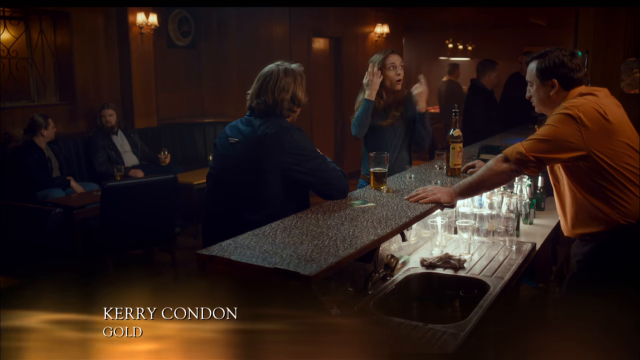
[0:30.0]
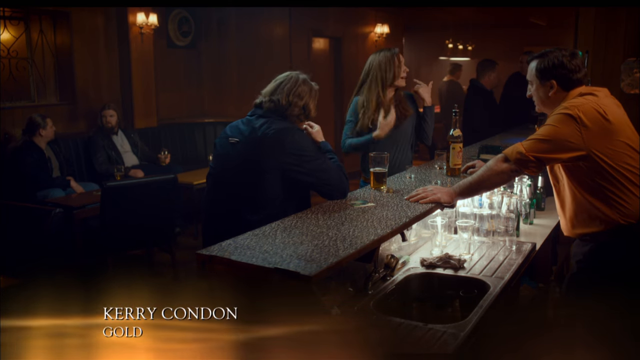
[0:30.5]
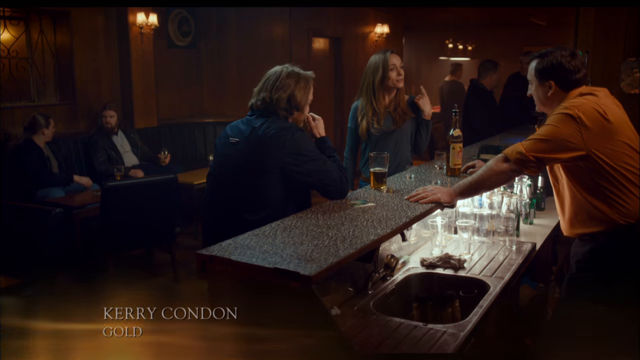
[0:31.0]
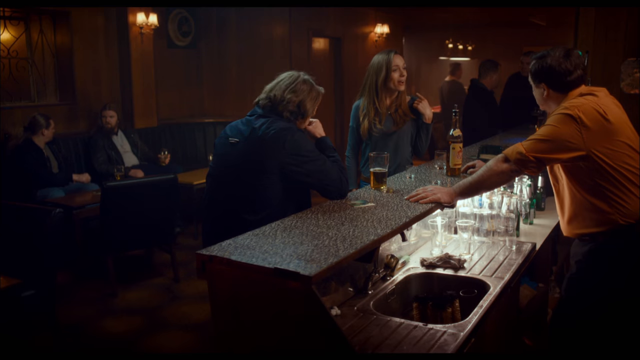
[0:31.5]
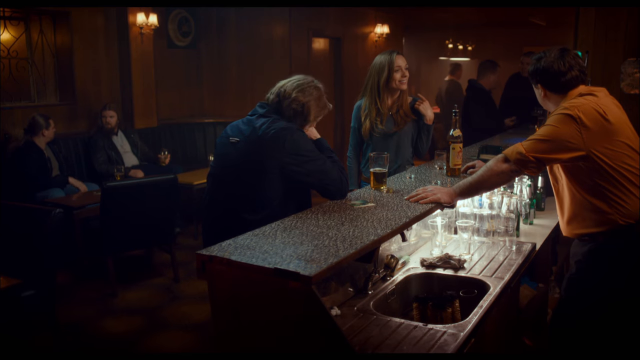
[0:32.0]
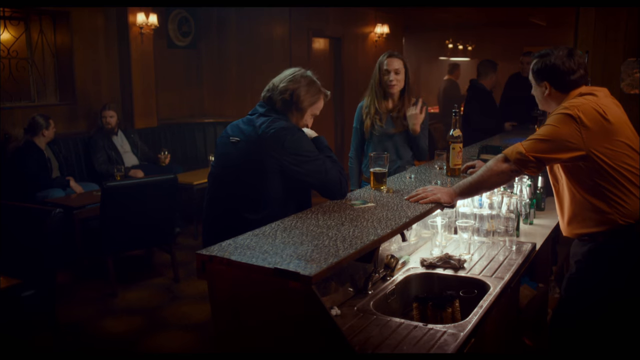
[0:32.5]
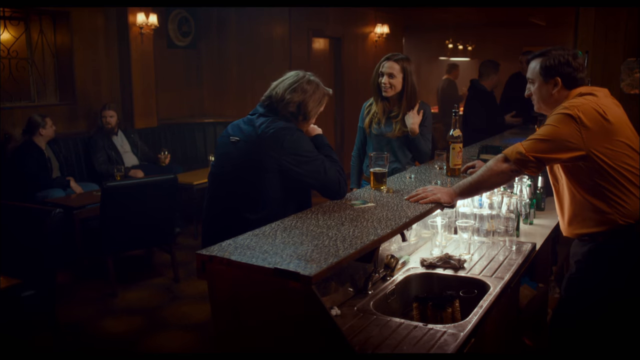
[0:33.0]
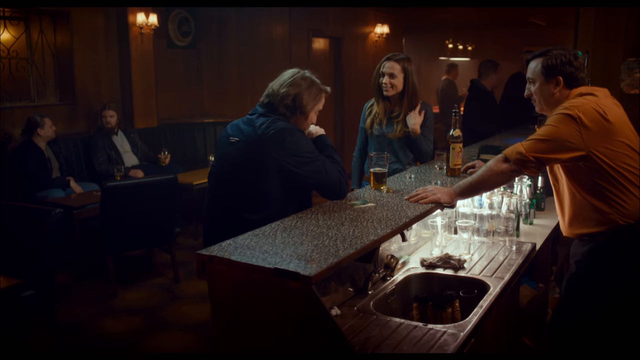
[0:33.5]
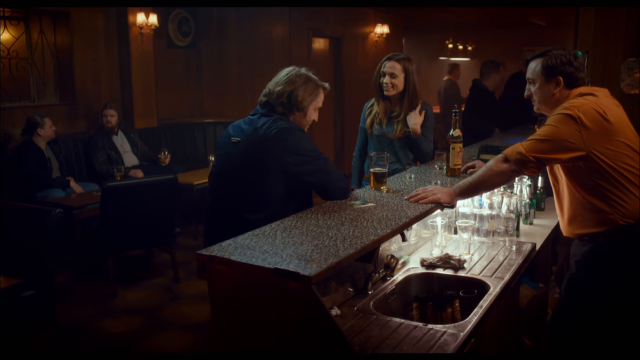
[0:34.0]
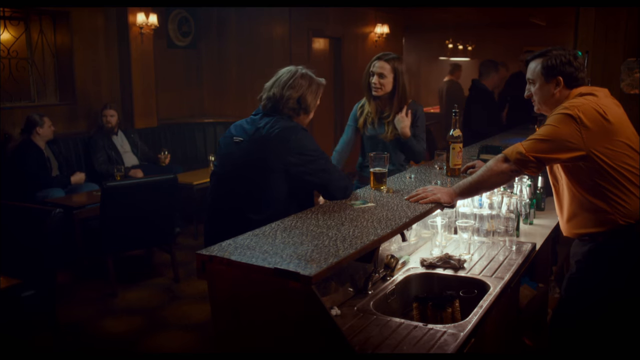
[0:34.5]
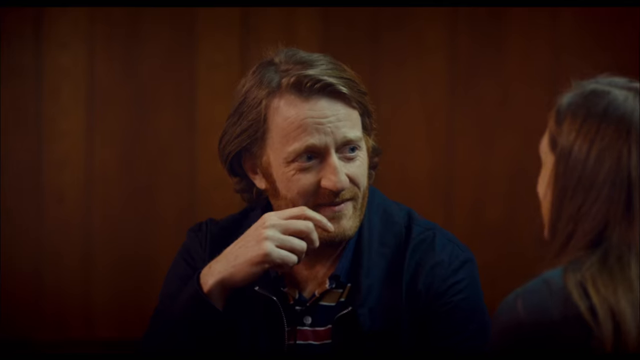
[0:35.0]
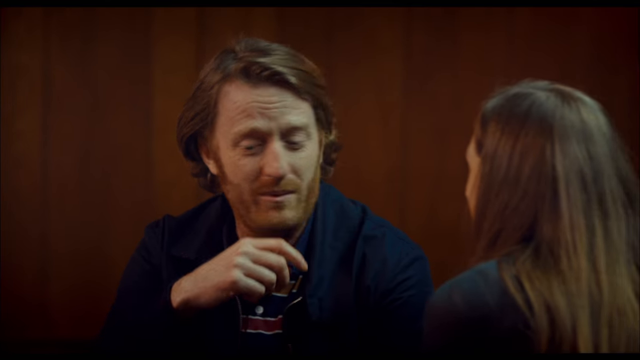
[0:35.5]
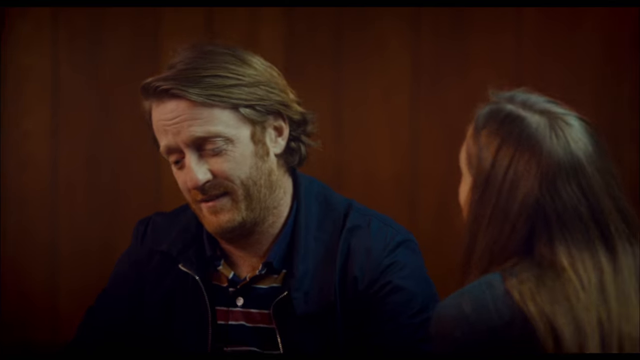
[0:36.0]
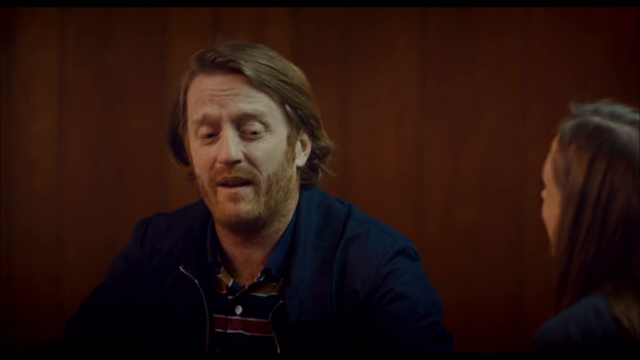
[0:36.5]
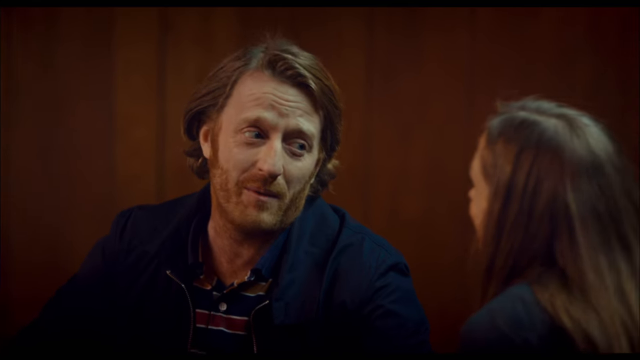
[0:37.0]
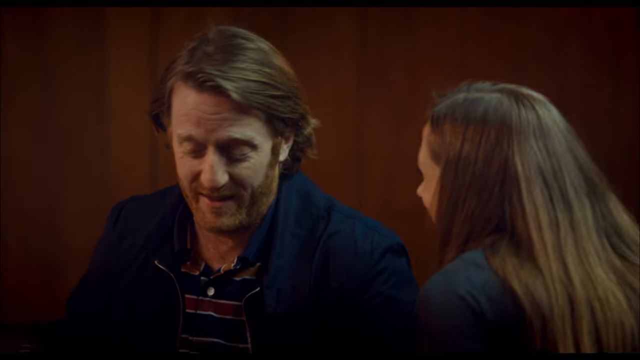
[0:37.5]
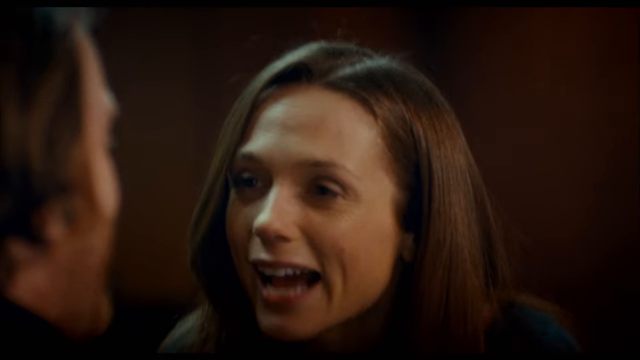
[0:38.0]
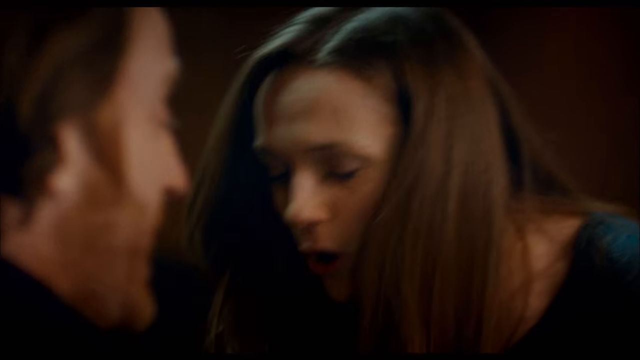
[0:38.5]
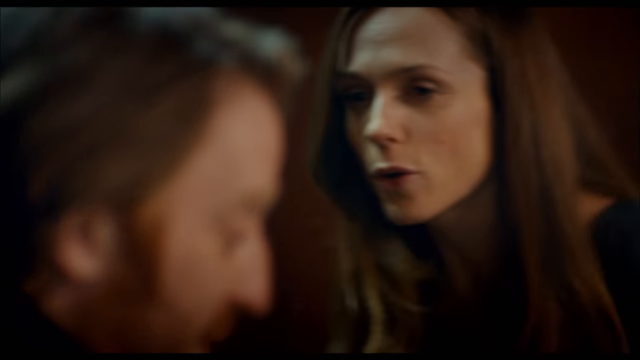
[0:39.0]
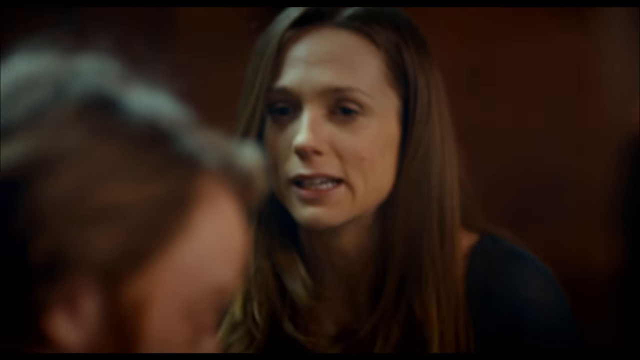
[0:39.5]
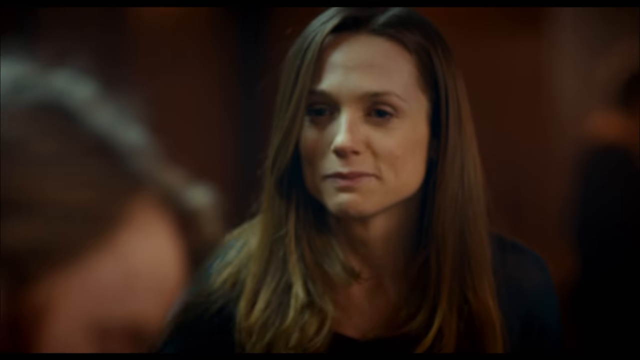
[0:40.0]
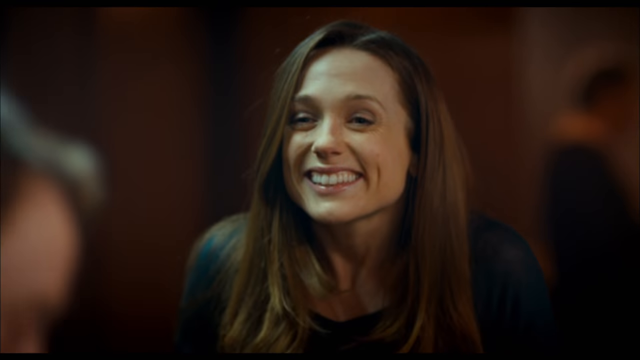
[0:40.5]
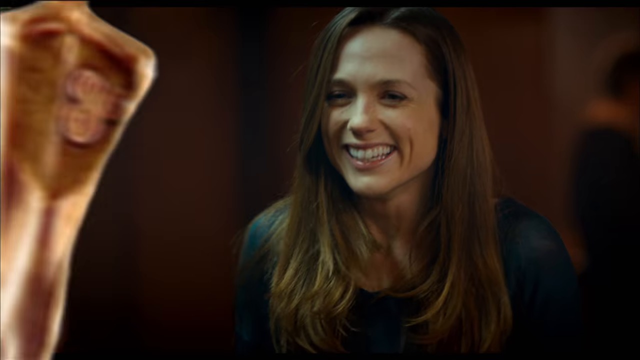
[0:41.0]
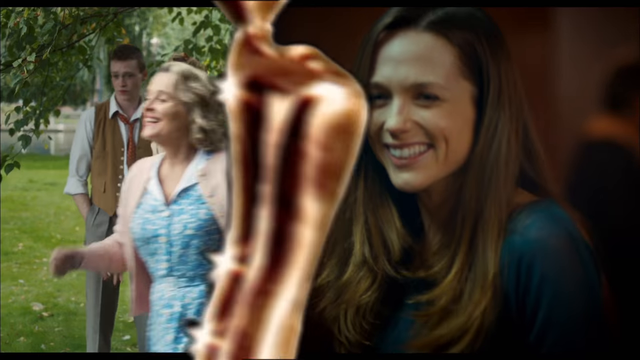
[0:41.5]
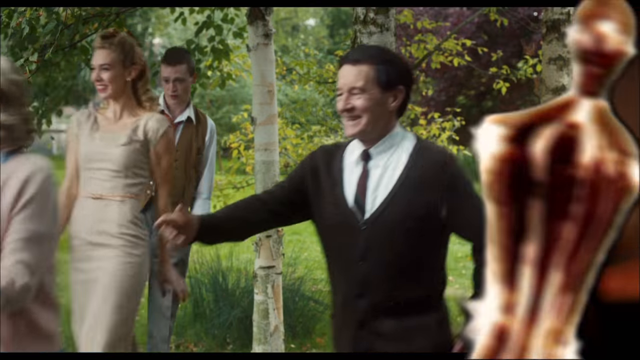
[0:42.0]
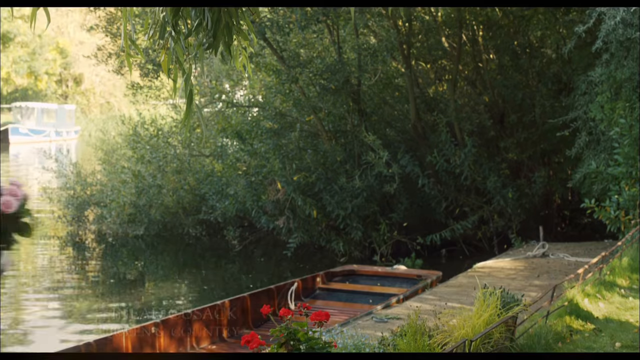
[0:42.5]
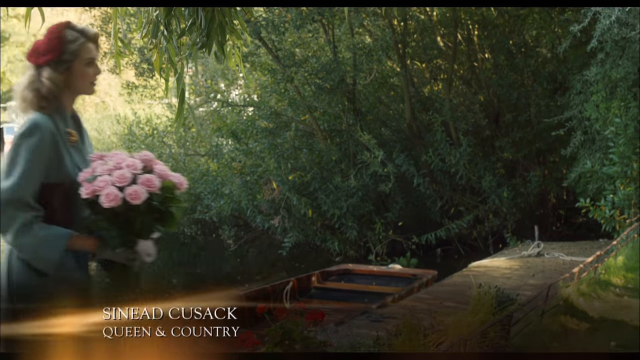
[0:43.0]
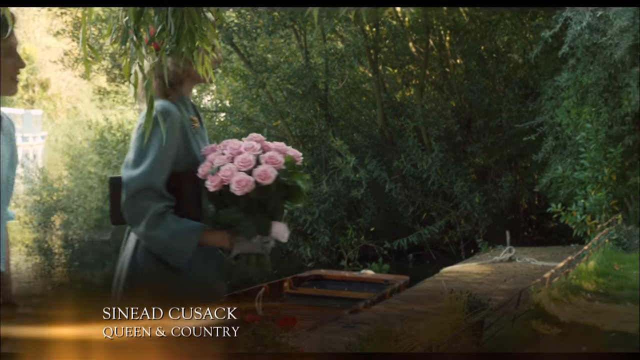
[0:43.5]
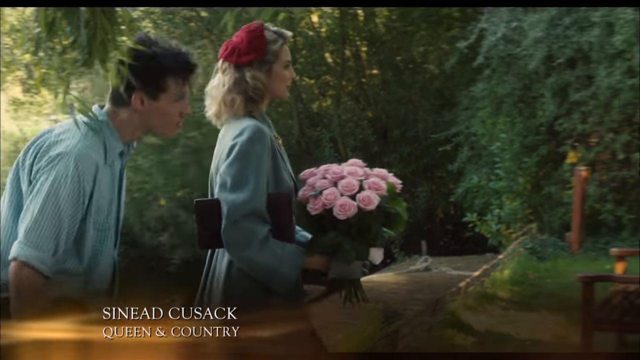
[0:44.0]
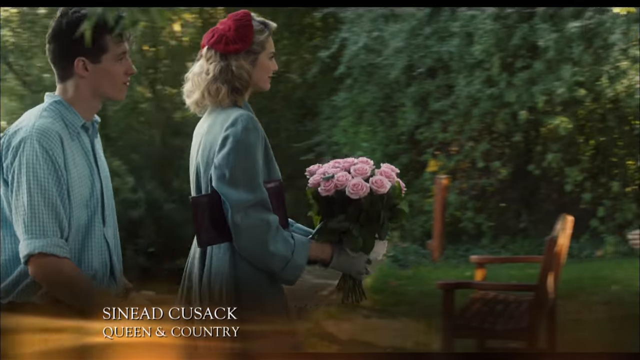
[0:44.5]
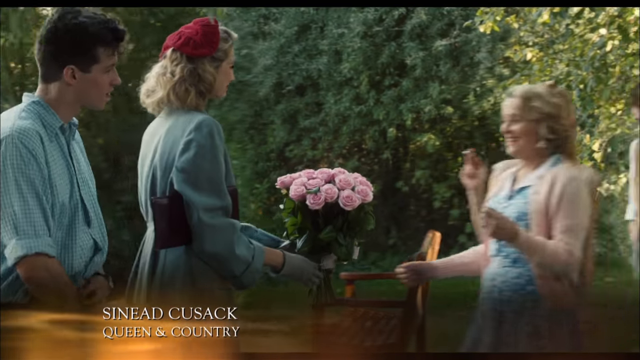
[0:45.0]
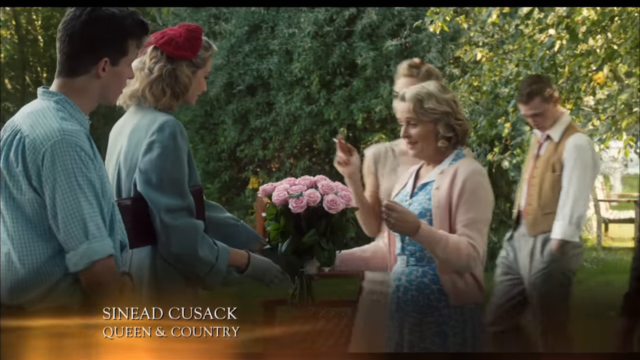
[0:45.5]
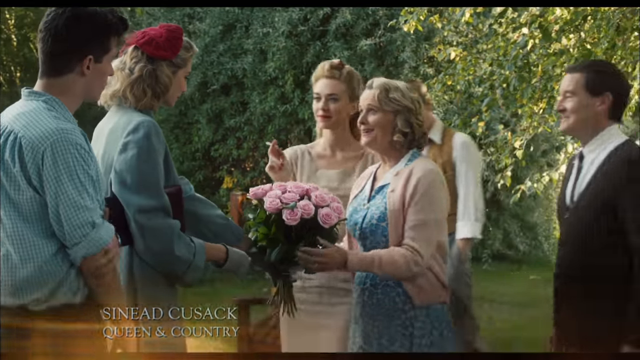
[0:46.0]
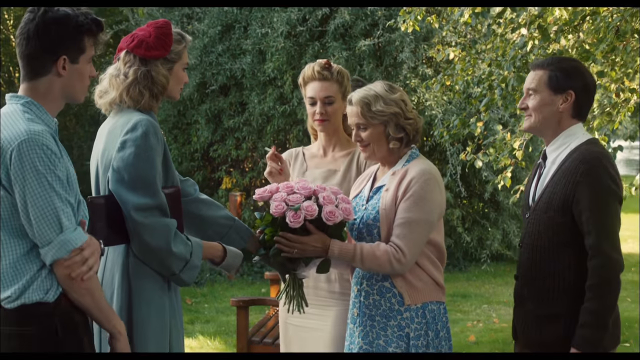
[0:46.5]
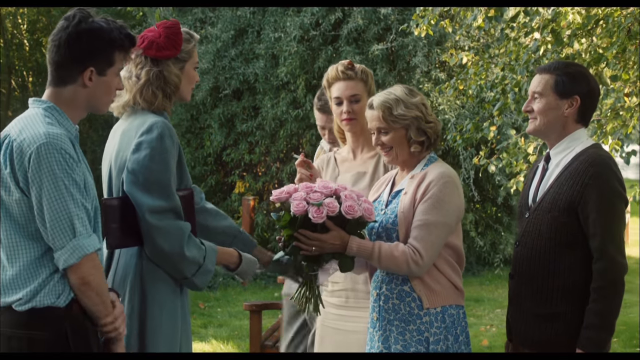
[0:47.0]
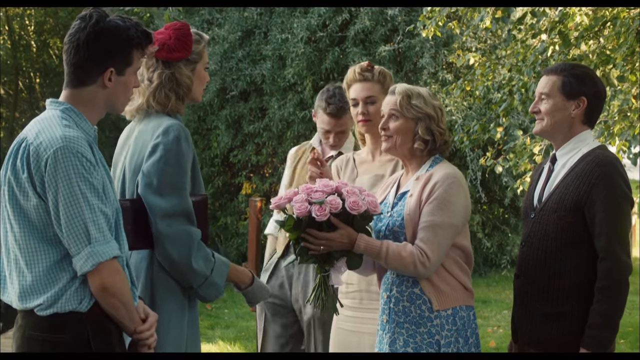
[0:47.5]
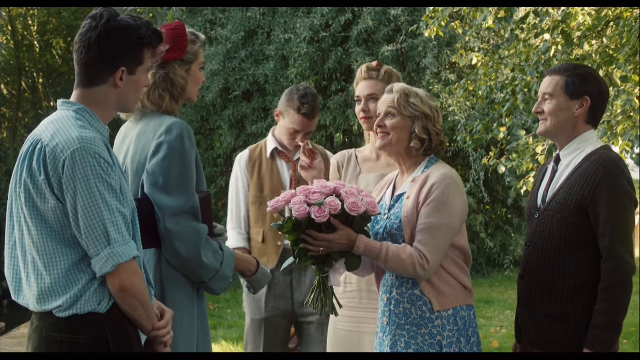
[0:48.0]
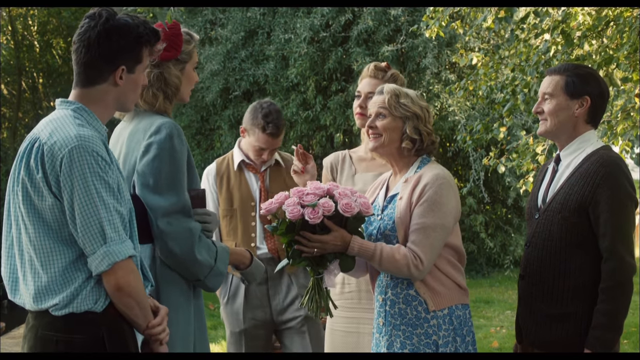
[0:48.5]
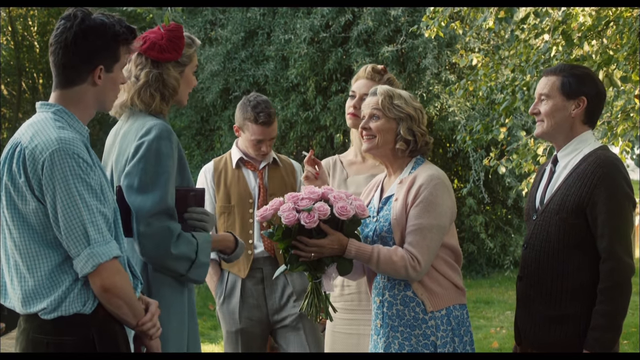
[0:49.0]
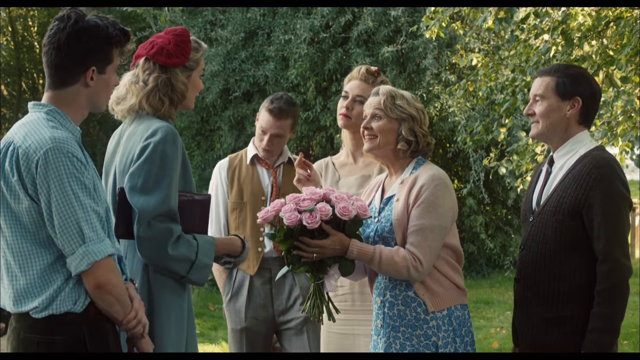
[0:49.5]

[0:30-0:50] The bar scene continues, with "Carrie Kondo" in gold in the bottom corner. A man in what looks like an orange shirt sits behind the bar, while a woman and a man talk to each other in front of it; she wears a blue shirt. There is a glass of beer in front of the men and what looks like a bottle of beer in front of the woman, and they look like they know each other well. The video then changes to another scene with "queen and country" written underneath a name; it looks like it may take place in the 1940s. In it, a woman in a red hat shows up with a pink bouquet of roses and hands the flowers to an older lady.